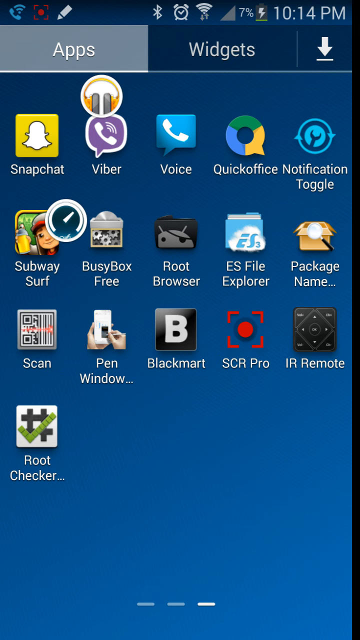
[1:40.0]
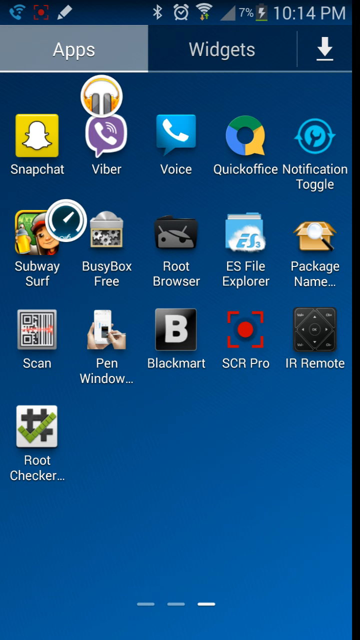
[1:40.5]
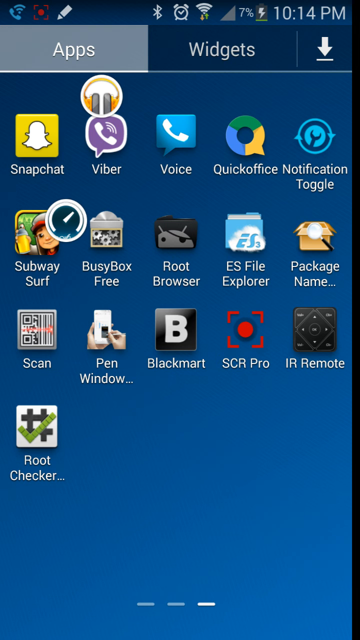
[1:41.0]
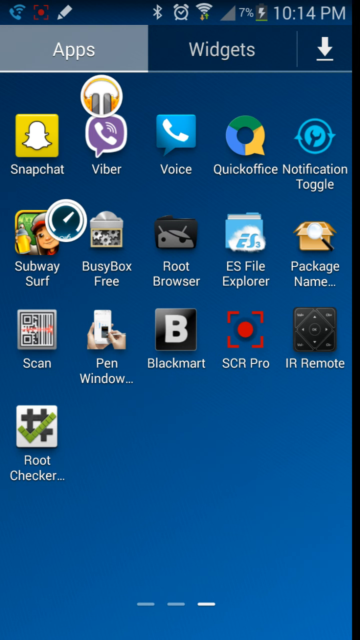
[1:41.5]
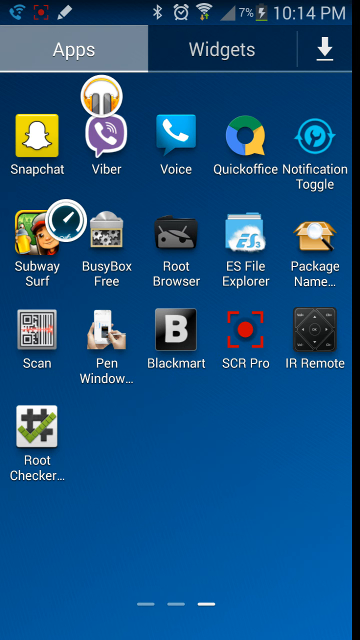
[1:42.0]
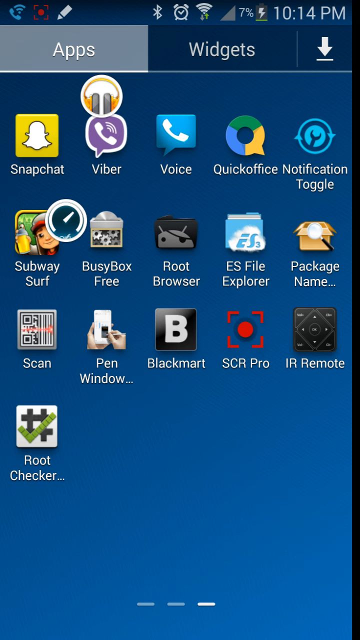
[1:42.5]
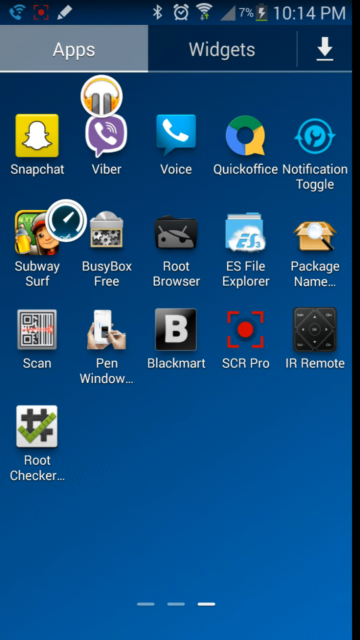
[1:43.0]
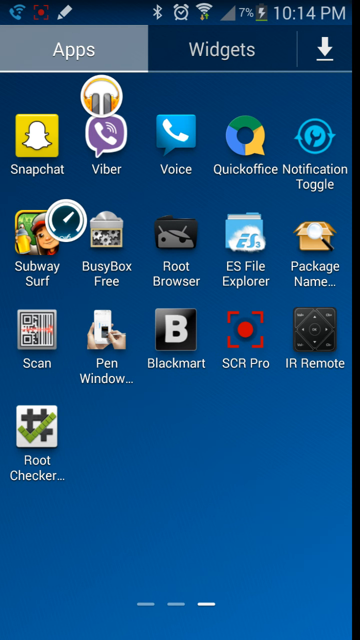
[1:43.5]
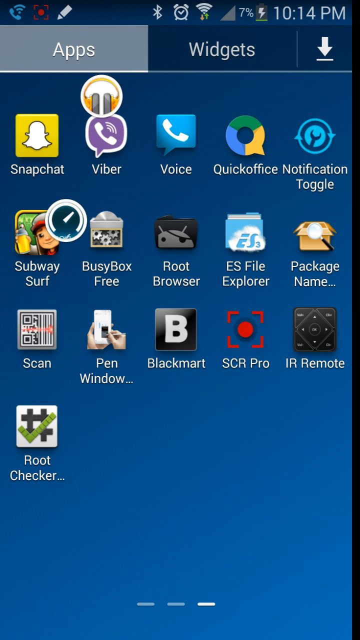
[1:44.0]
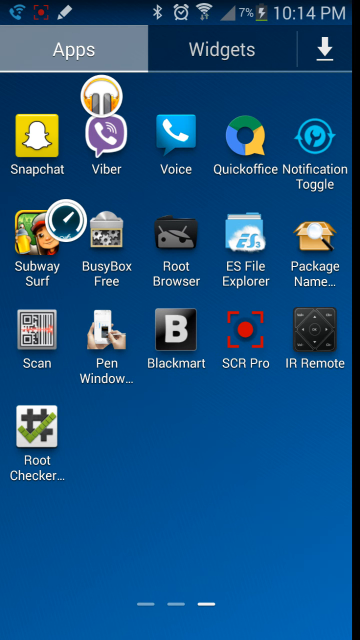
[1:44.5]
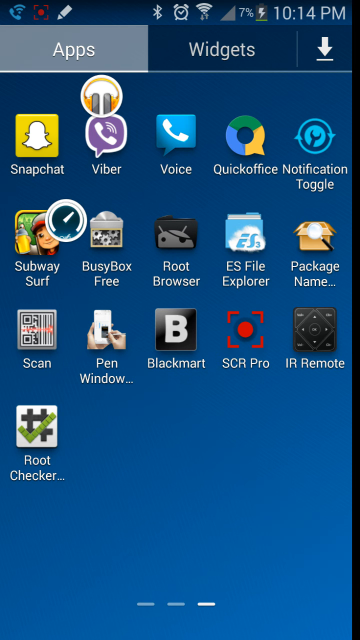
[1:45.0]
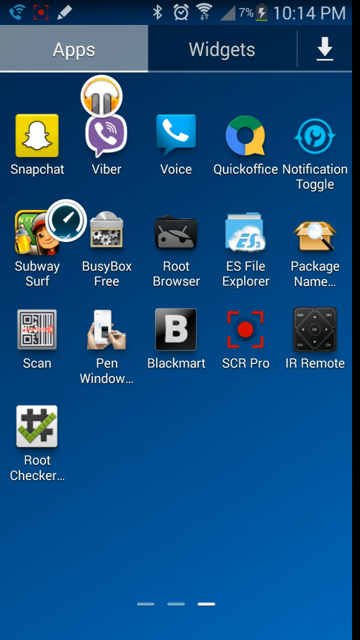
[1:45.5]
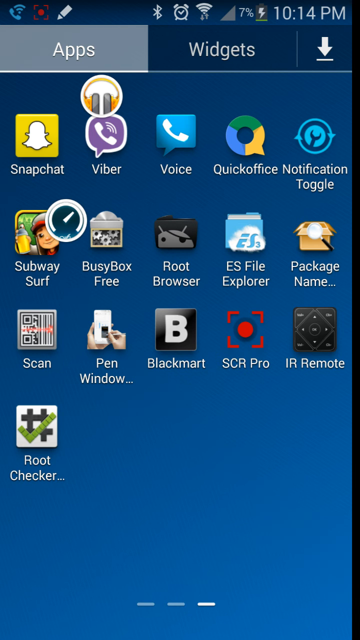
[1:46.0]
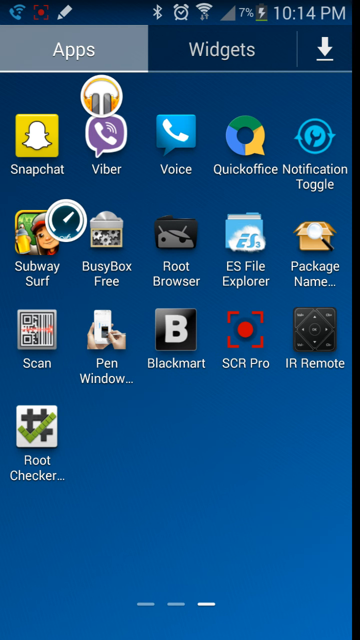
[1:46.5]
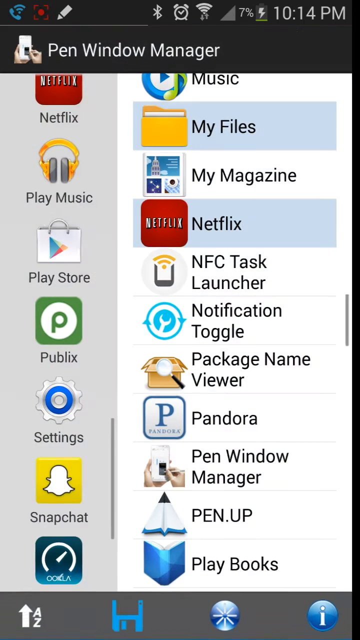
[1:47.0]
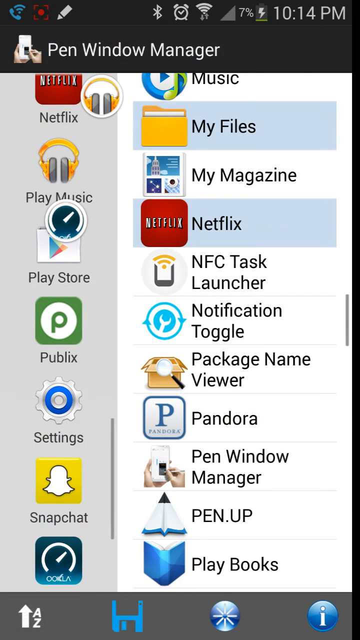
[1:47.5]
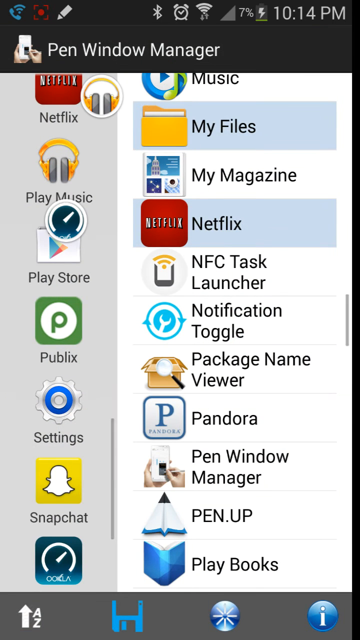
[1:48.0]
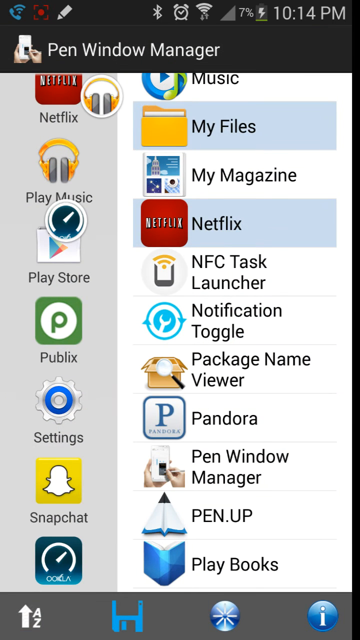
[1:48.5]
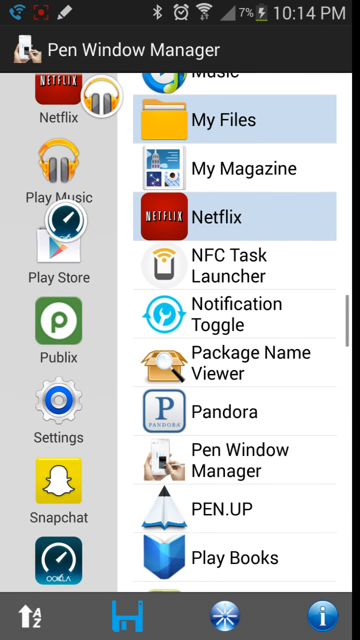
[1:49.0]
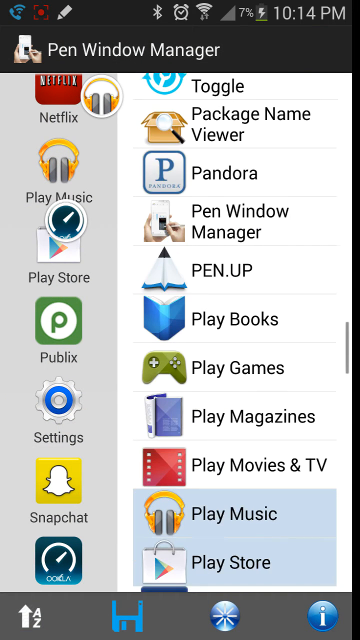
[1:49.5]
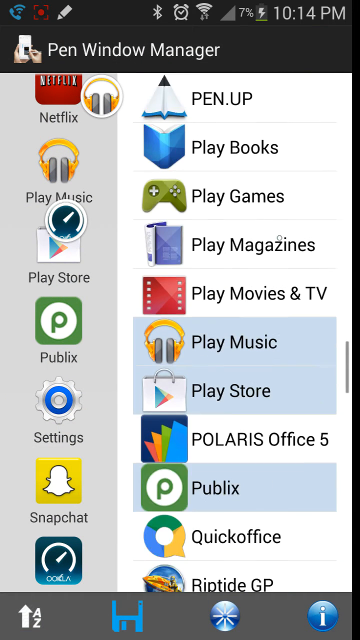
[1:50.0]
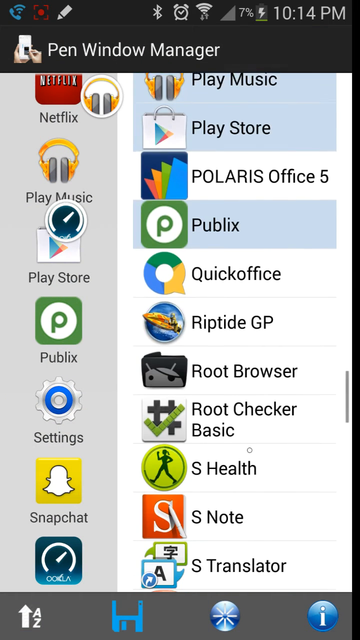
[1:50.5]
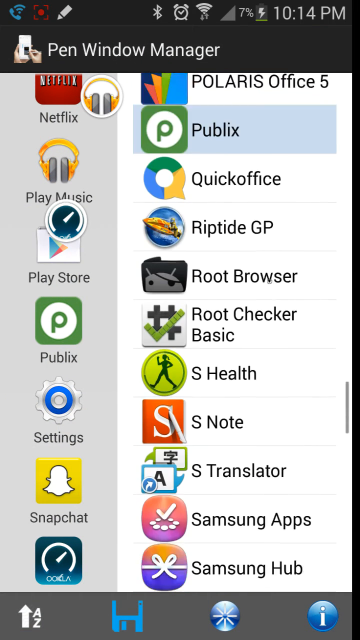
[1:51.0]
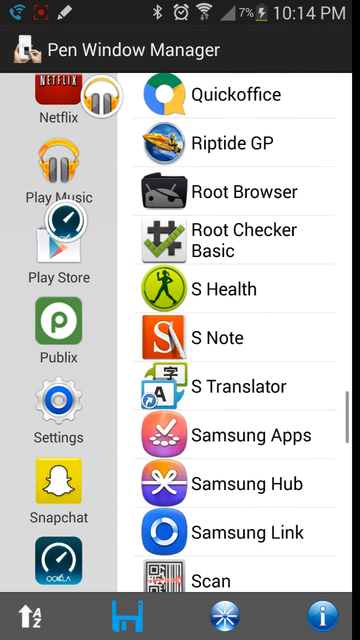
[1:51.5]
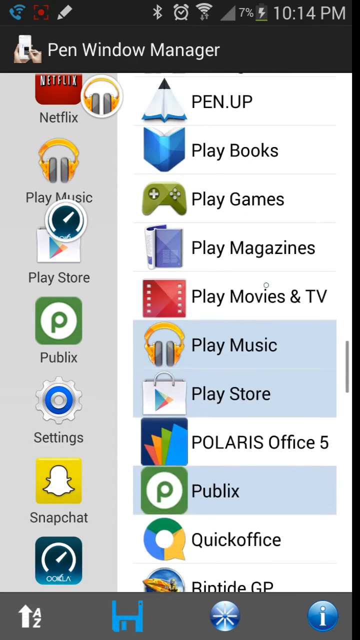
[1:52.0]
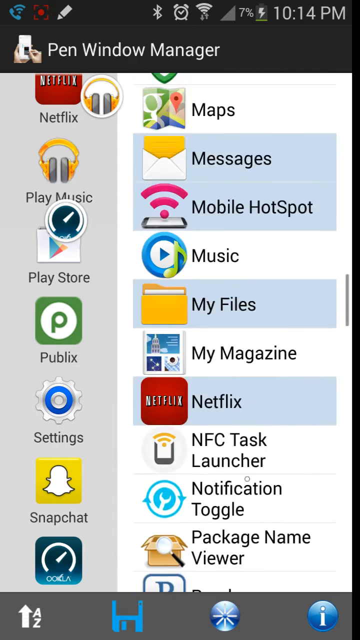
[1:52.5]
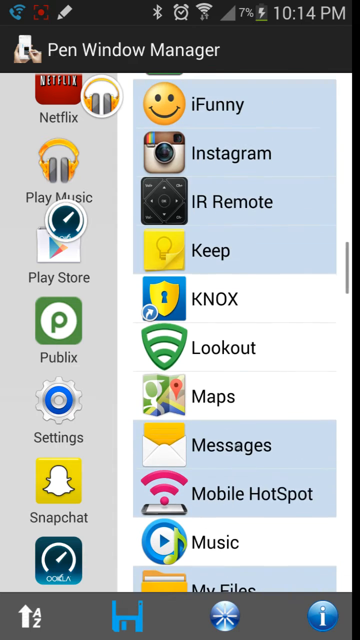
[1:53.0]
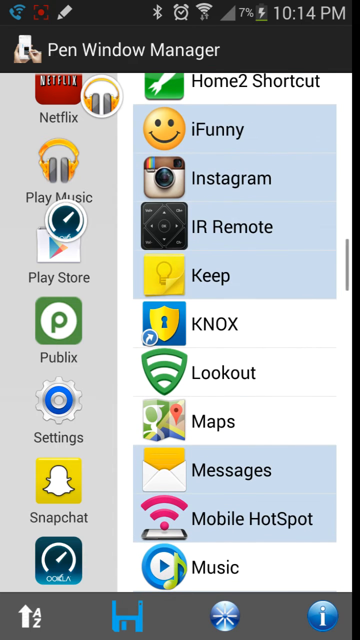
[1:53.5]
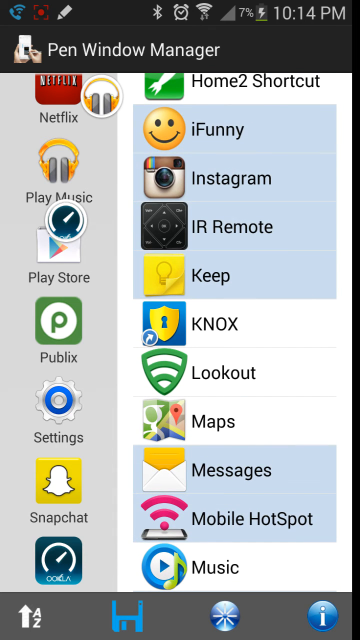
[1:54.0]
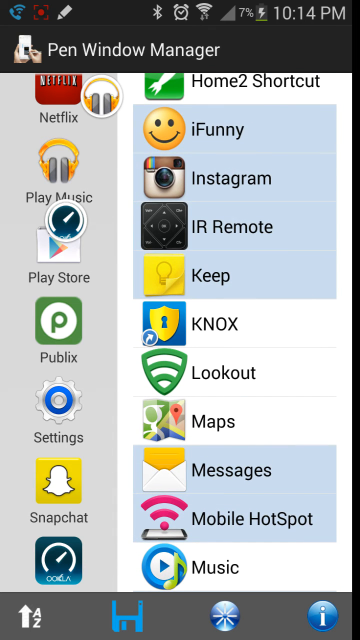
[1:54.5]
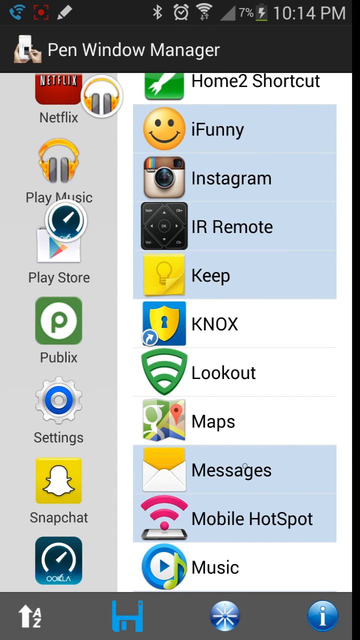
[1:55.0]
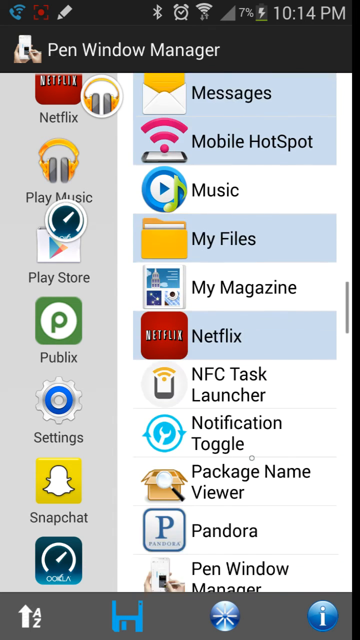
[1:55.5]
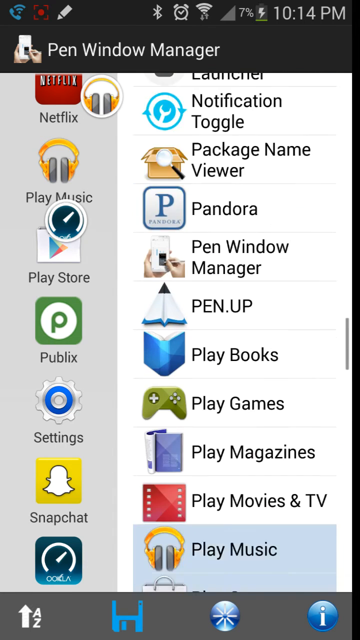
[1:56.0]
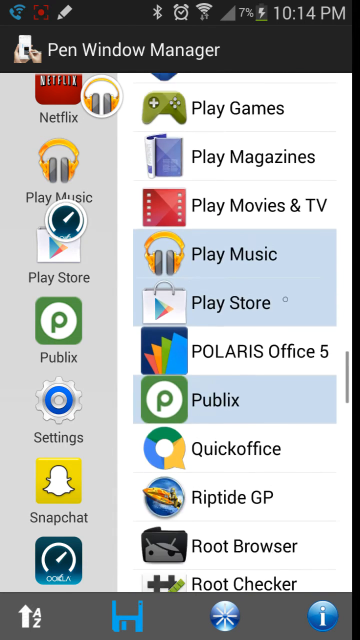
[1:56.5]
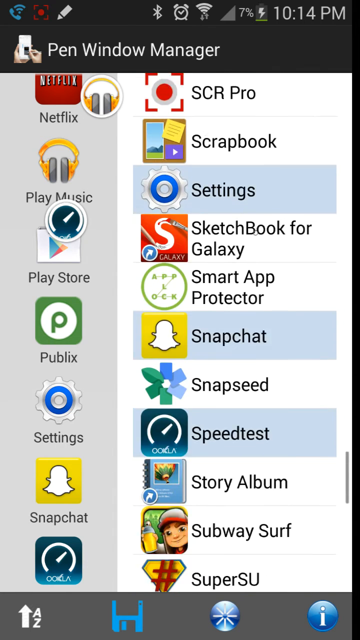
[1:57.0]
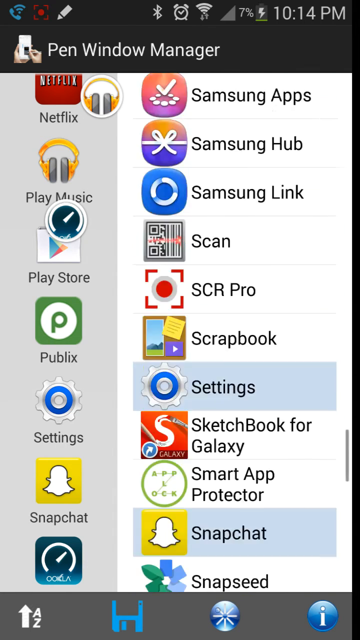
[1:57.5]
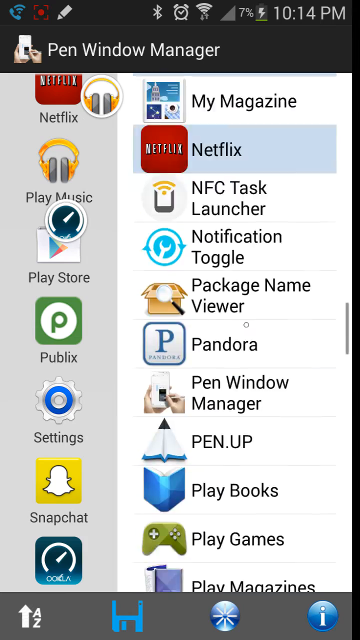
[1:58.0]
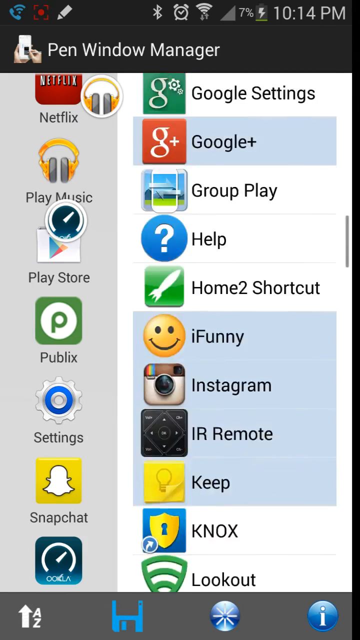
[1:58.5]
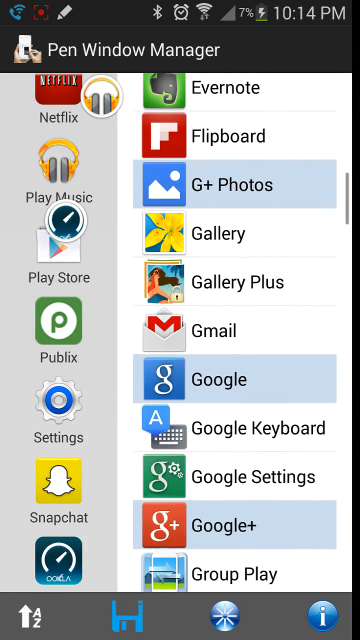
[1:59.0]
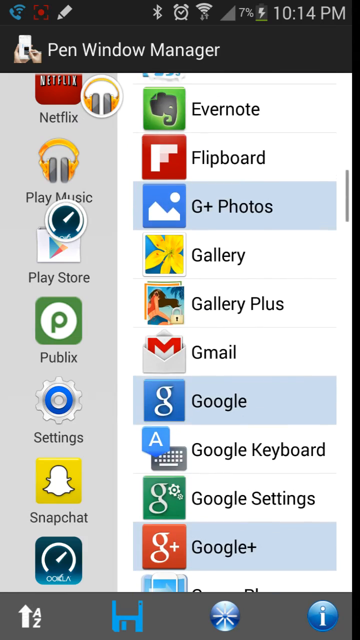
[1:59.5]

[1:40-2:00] The installed apps remain on screen. The user then opens a menu called PEN Window Manager. On the left it lists Netflix, Play Music, Play Store, Publix, Settings, Snapchat and Speedtest; on the right are more options such as Music, My Files, My Magazine, Netflix, NFC Tags Launcher, Notification Toggle, Package Name Viewer, Pandora, PEN Window Manager, PEN Up, Play Books and more. The user scrolls down and up, seemingly looking for a specific one, but minimizes the menu without opening any app and shows the same app menu as before.